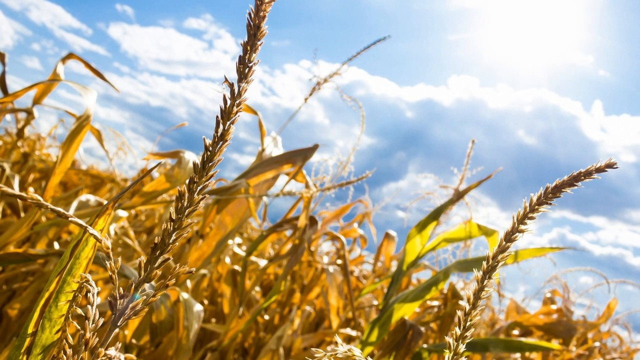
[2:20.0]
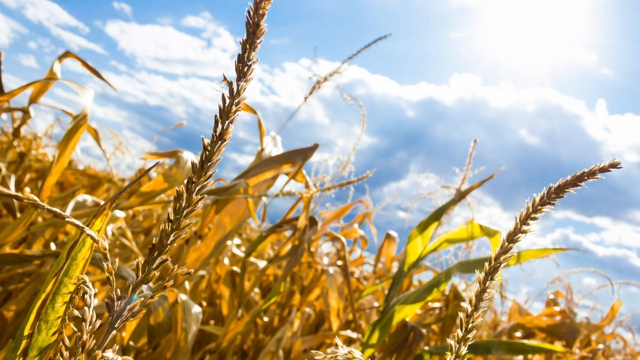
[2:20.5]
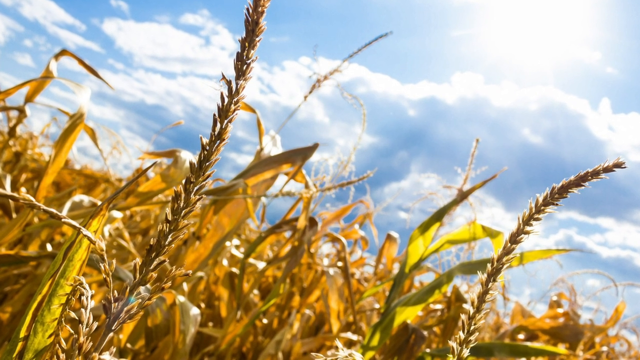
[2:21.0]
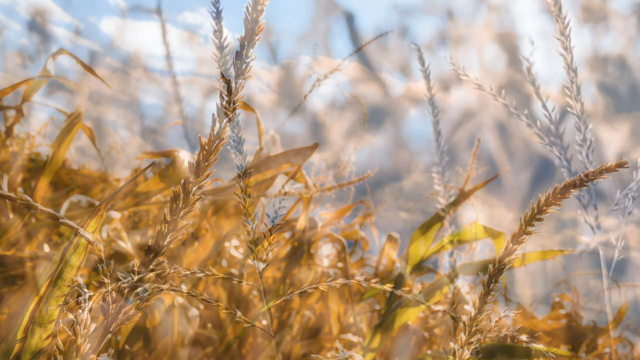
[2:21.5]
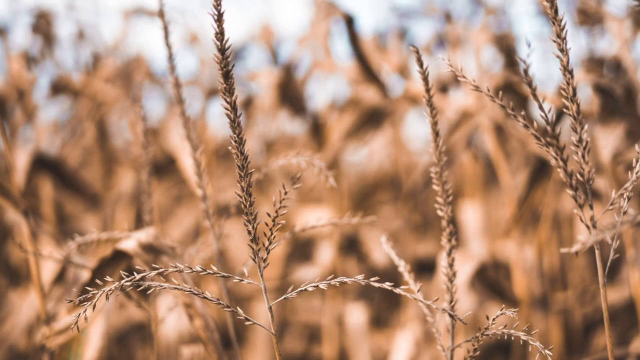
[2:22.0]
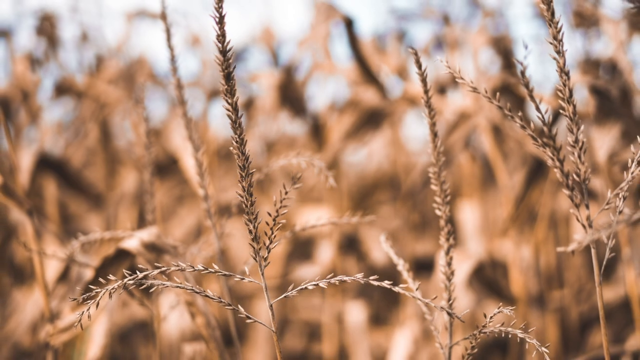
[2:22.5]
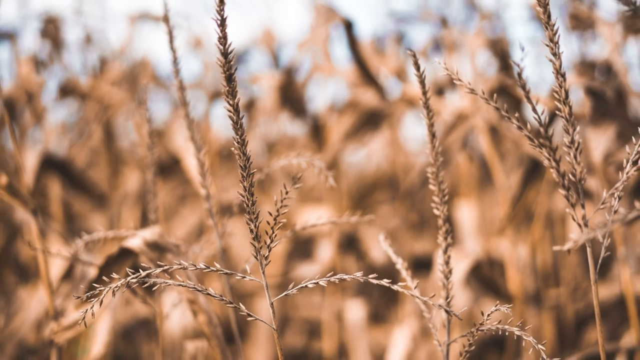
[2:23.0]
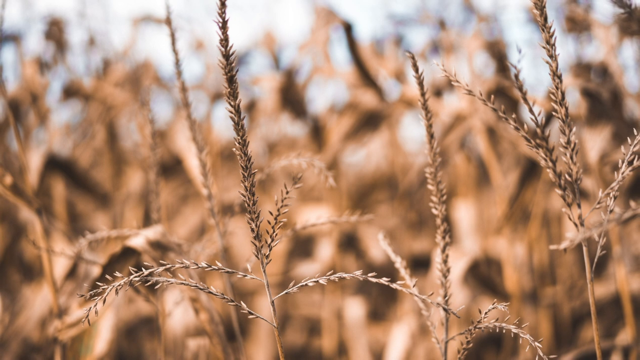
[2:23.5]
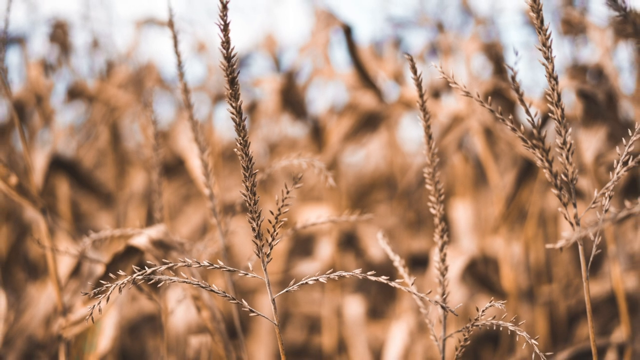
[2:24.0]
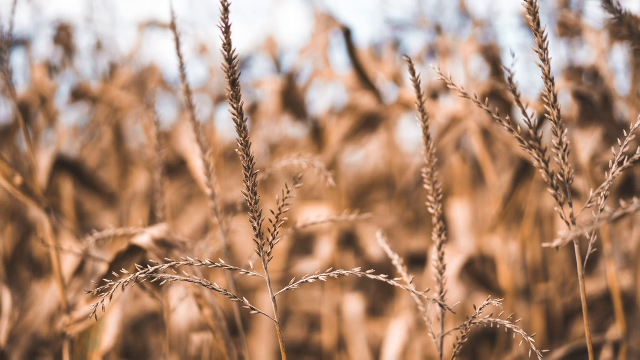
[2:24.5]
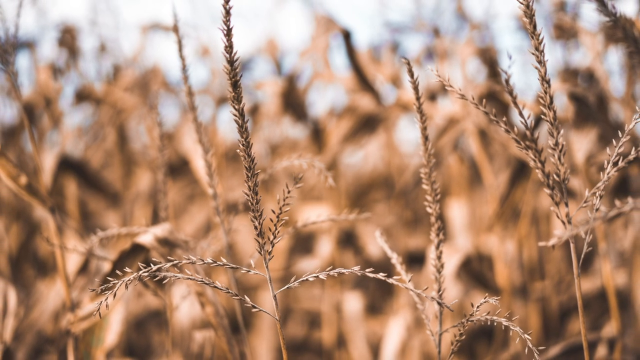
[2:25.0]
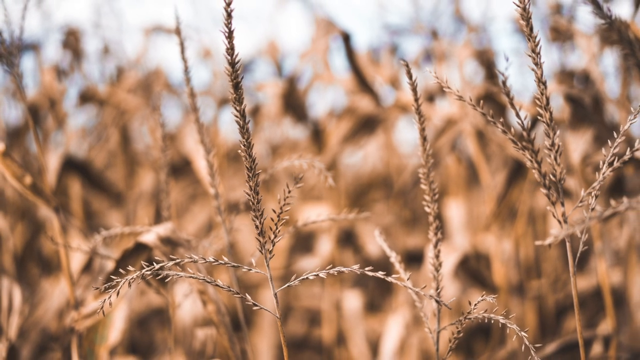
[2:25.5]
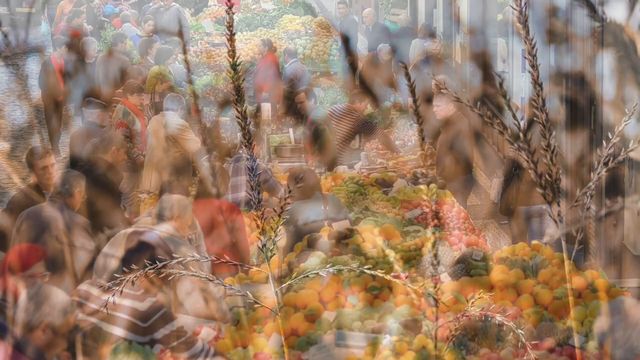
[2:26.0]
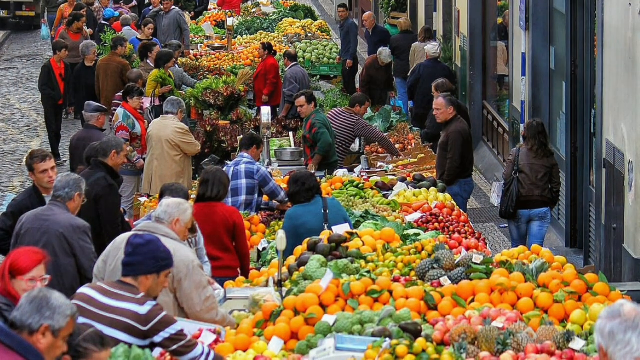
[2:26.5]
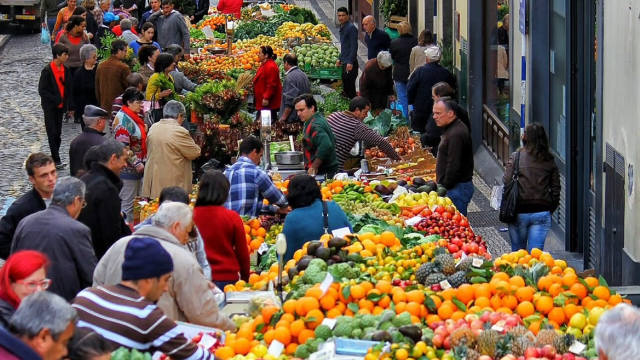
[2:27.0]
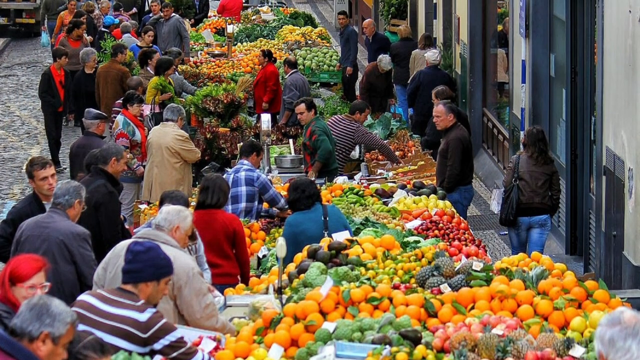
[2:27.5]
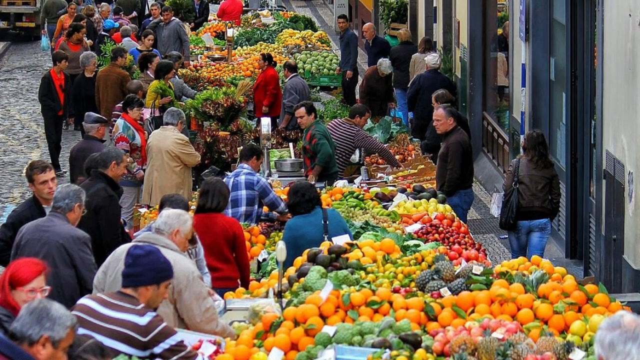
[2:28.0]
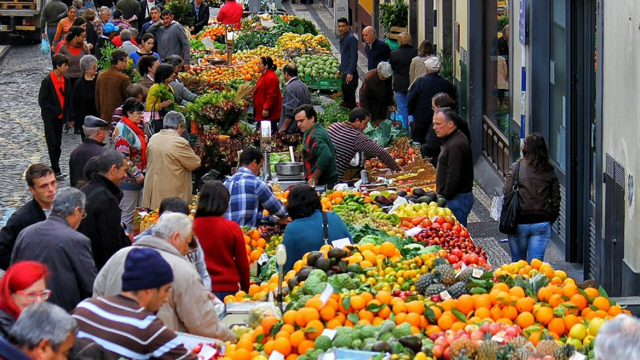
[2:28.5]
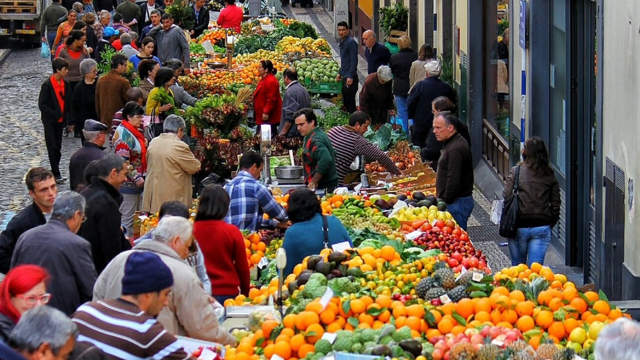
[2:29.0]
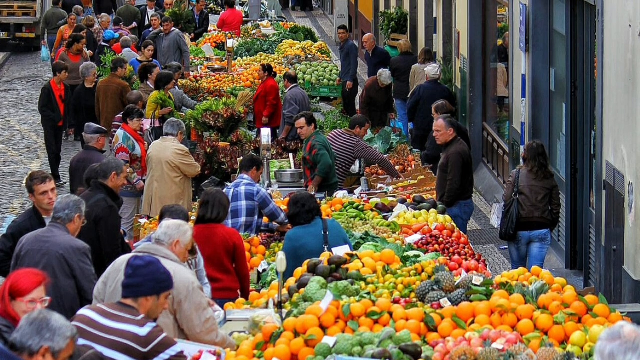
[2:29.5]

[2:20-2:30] What looks like a crop field is on the left side, followed by a close-up view of grains and wheat. The view then changes to a lot of people shopping in an outdoor supermarket with many fruits and vegetables. People are on the left and right sides, and the center is mostly taken up by large tables of various fruits and vegetables, including many oranges, avocados, tomatoes and what look like apples.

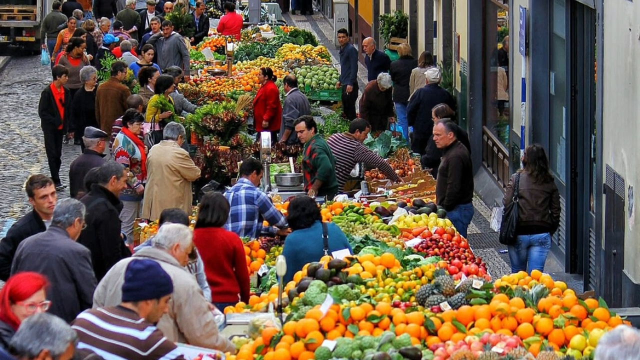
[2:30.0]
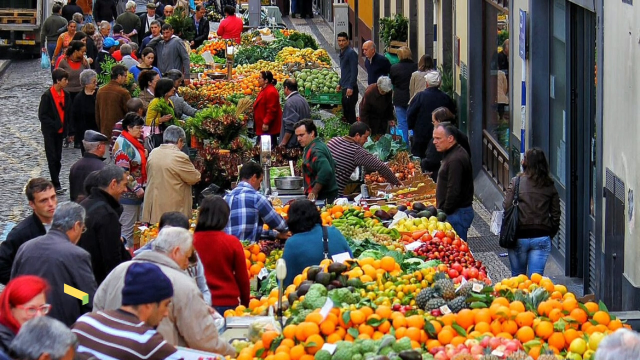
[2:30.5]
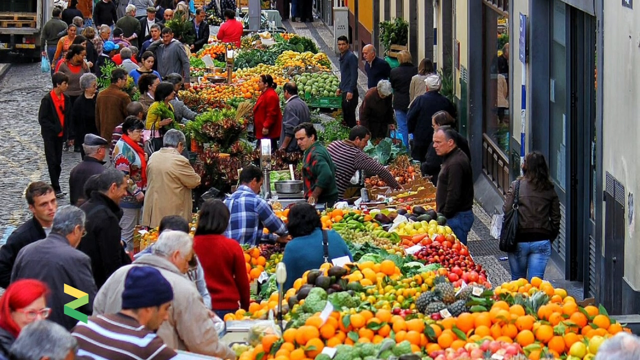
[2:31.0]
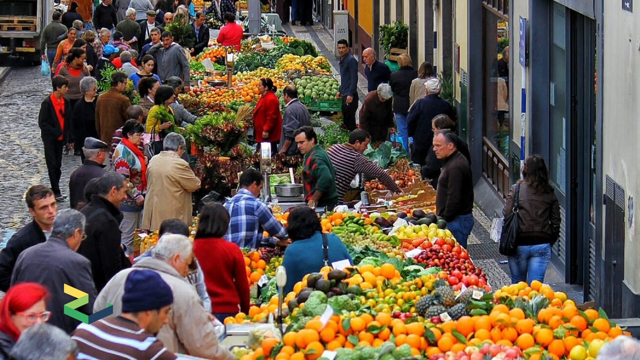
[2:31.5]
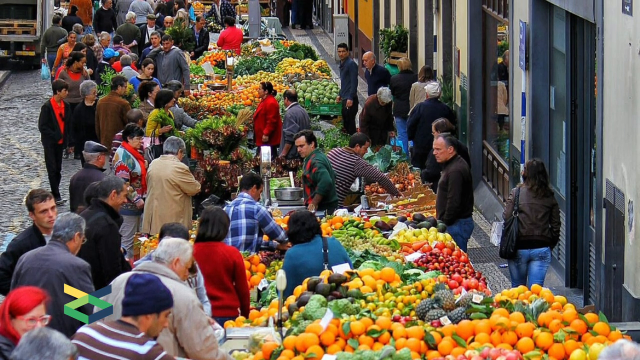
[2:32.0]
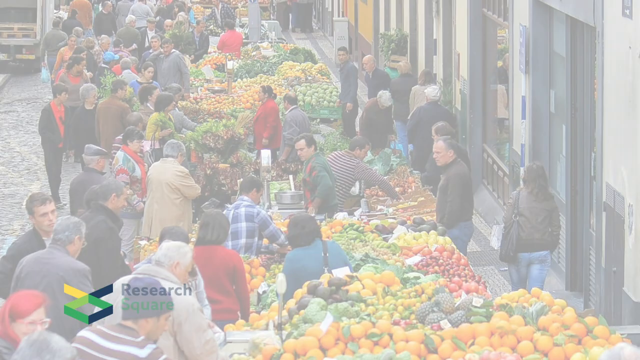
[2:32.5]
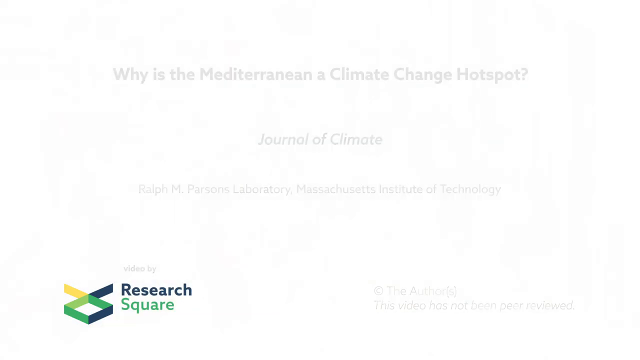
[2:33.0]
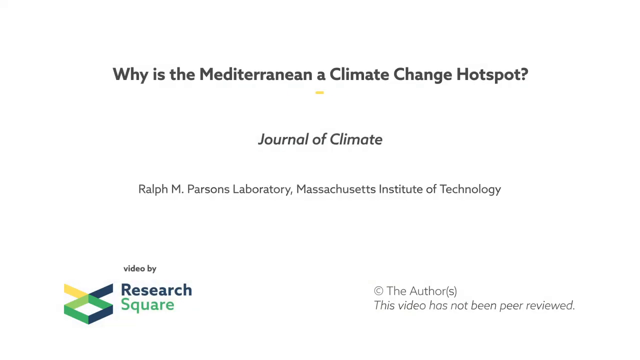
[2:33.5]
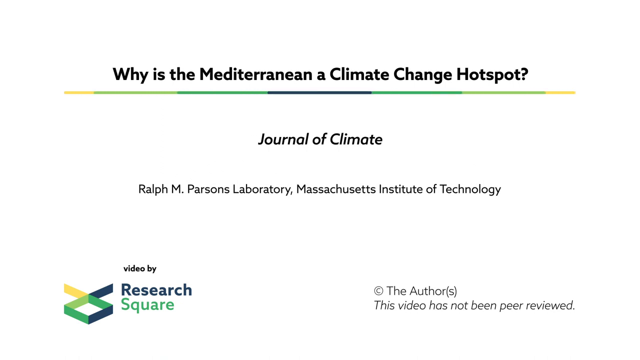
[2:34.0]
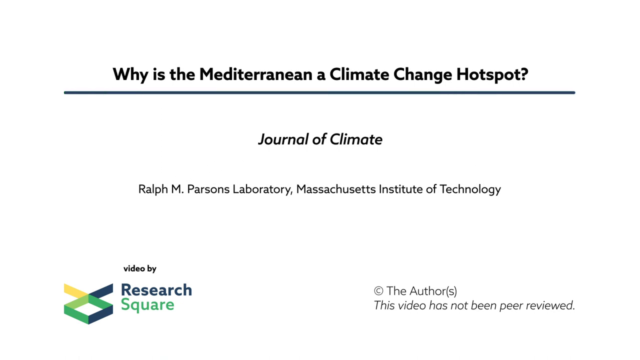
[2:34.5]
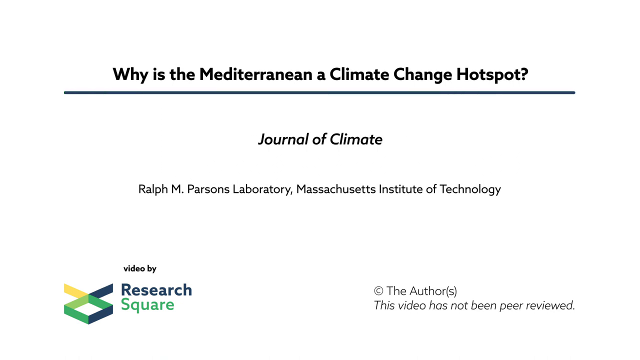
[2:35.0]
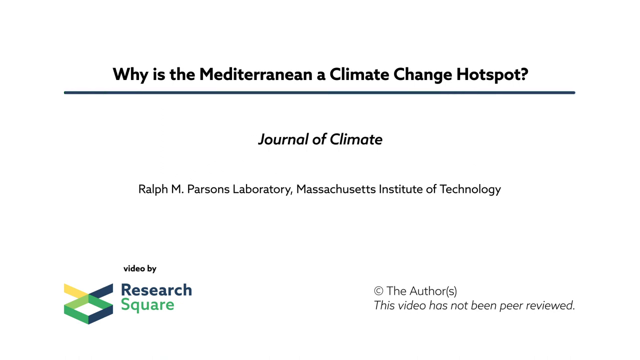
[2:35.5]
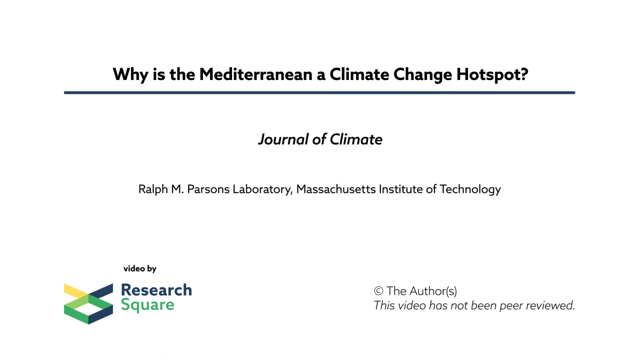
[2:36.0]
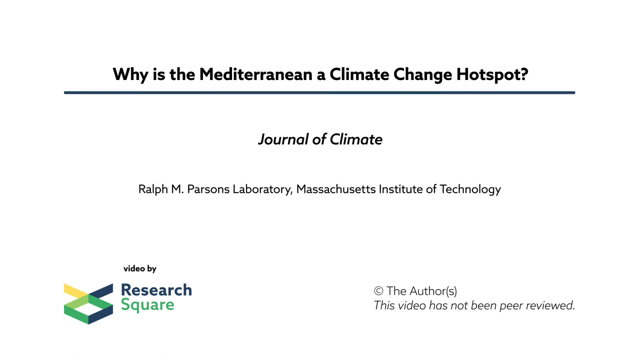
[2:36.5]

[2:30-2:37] People continue shopping in the outdoor area, with a very large group of people on the left side. In the top left corner is what looks like the back of a truck, and on the far right side are very tall buildings. The scene then changes to a white background. At the top are the words "Why is the Mediterranean a climate change hotspot?" In the middle, text shows that the video was brought to you by the journal Climate, and below that the text reads "Ralph M. Parsons Laboratory, Massachusetts Institute of Technology." The bottom left corner shows that the video was by a company called Research Square.